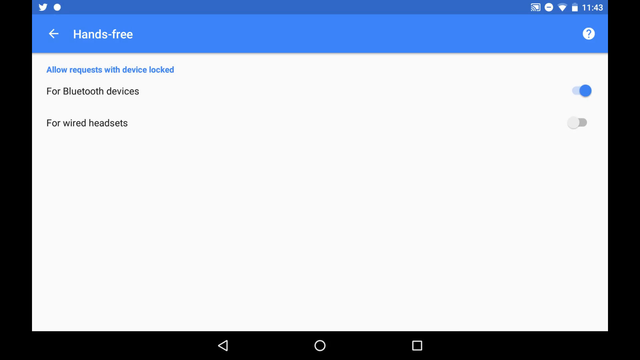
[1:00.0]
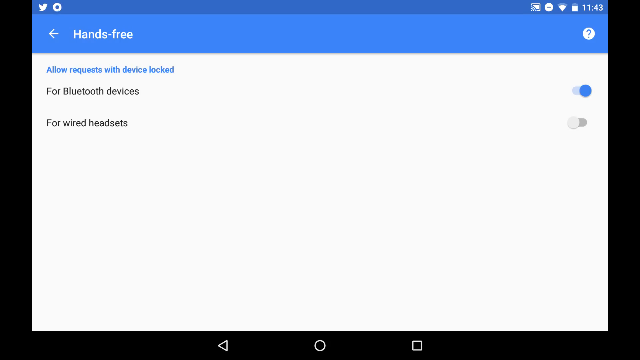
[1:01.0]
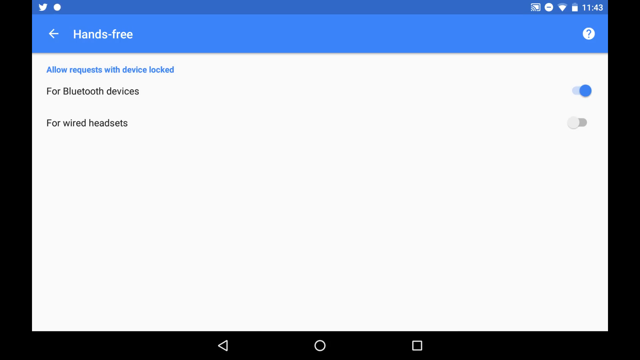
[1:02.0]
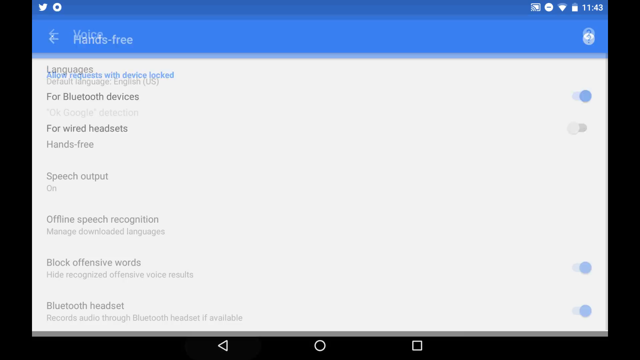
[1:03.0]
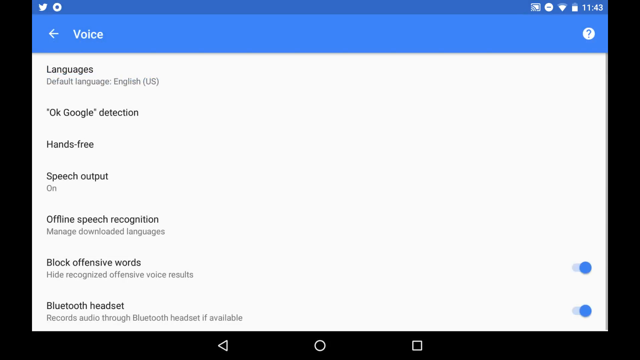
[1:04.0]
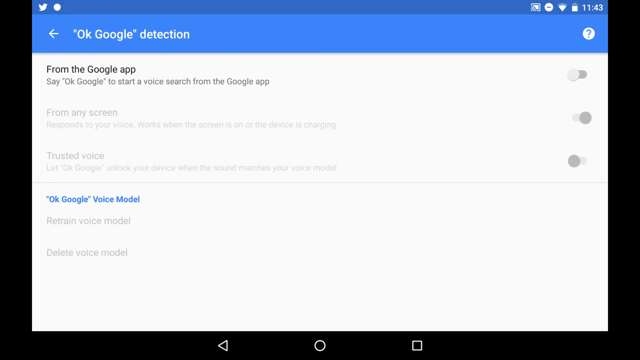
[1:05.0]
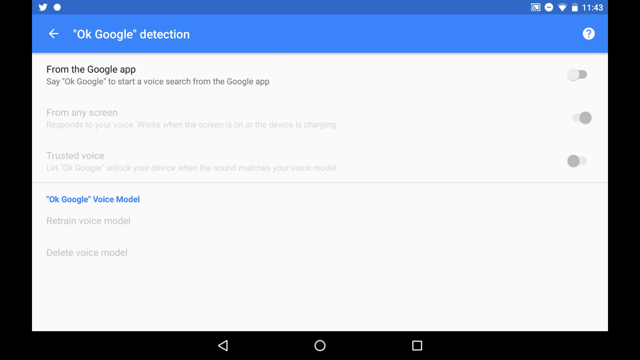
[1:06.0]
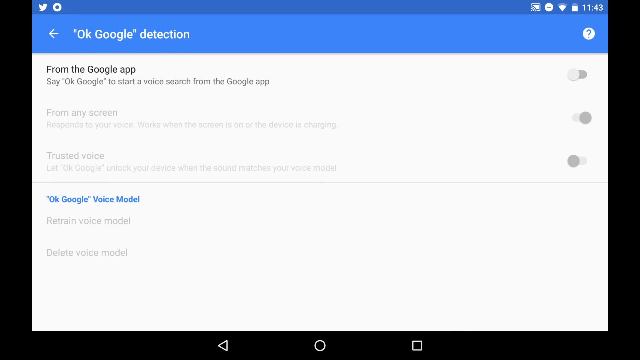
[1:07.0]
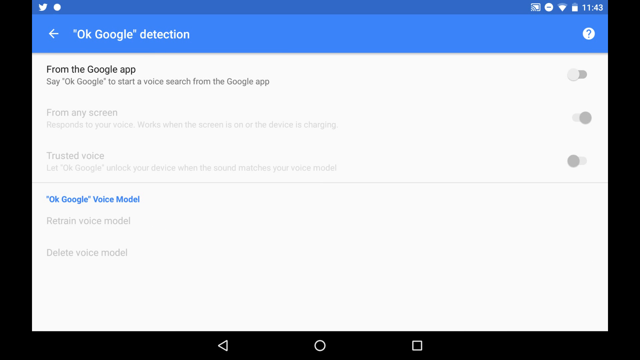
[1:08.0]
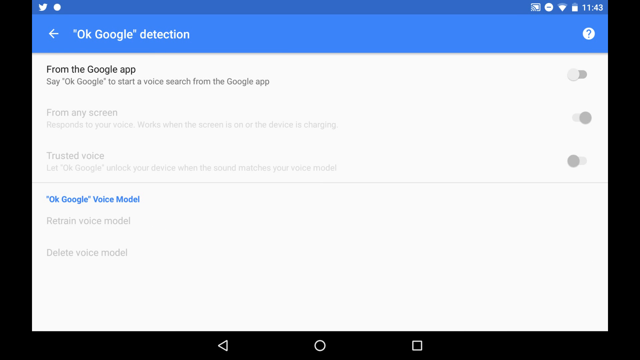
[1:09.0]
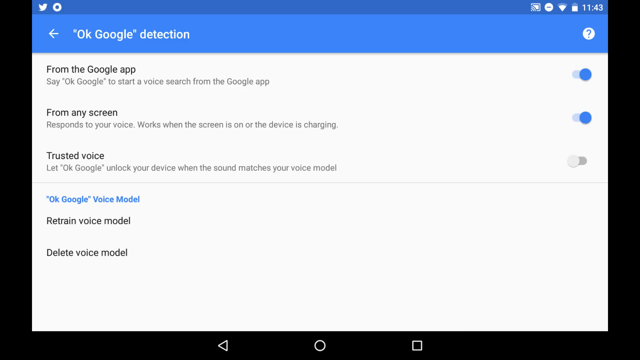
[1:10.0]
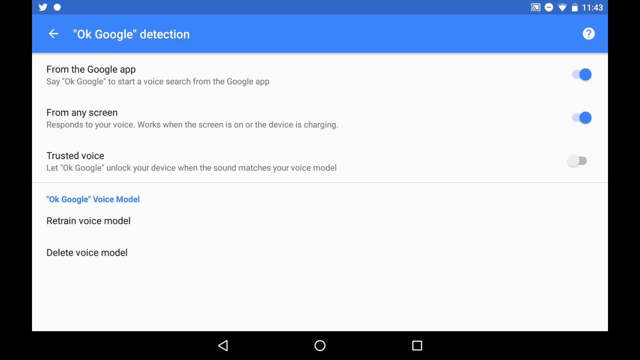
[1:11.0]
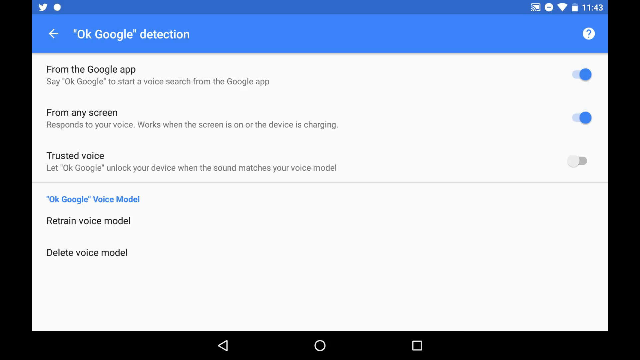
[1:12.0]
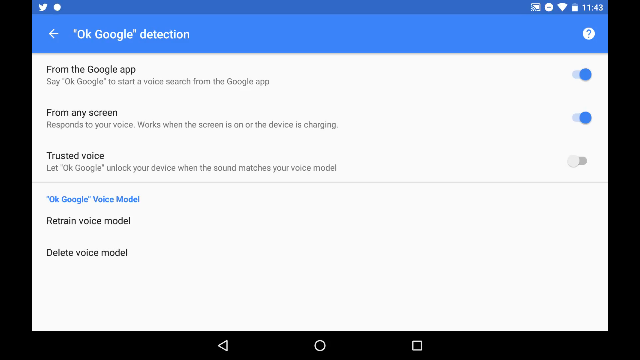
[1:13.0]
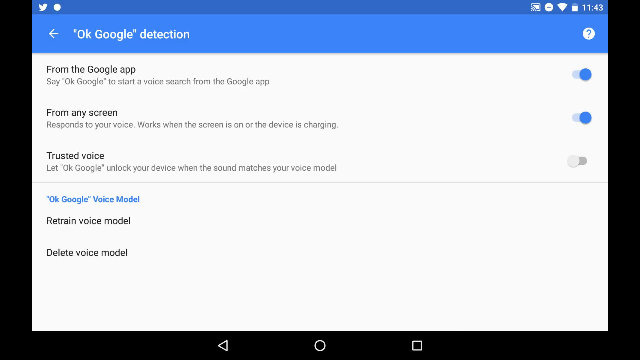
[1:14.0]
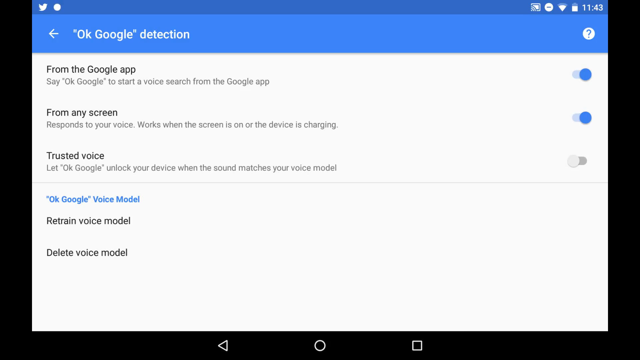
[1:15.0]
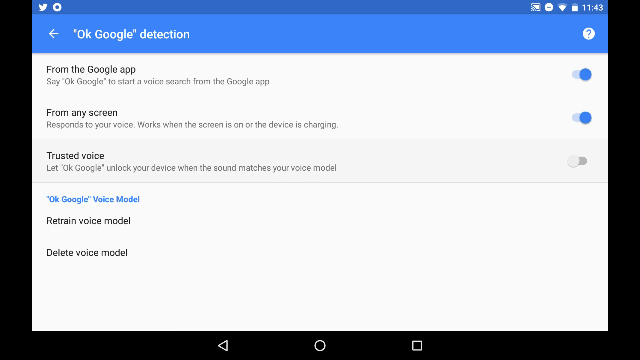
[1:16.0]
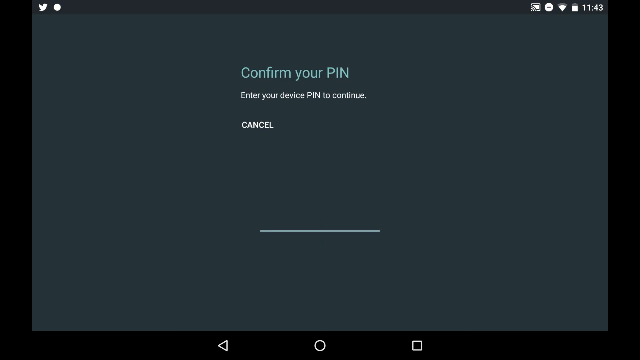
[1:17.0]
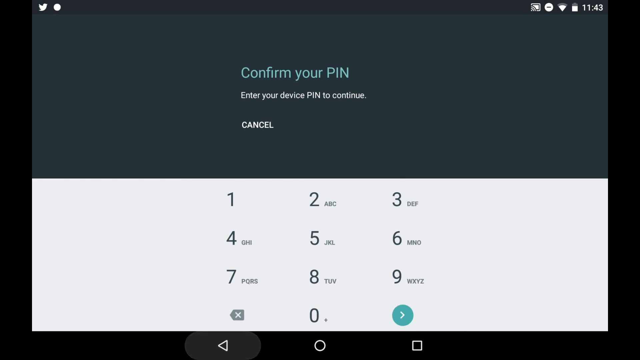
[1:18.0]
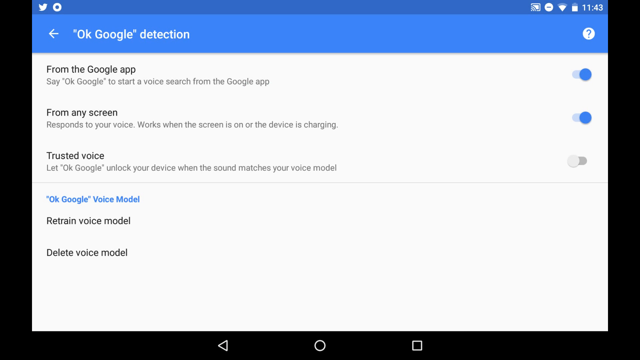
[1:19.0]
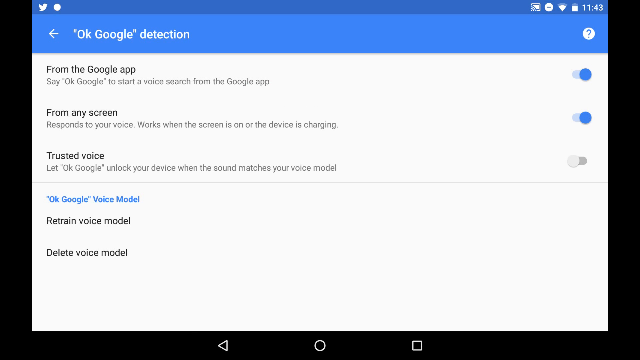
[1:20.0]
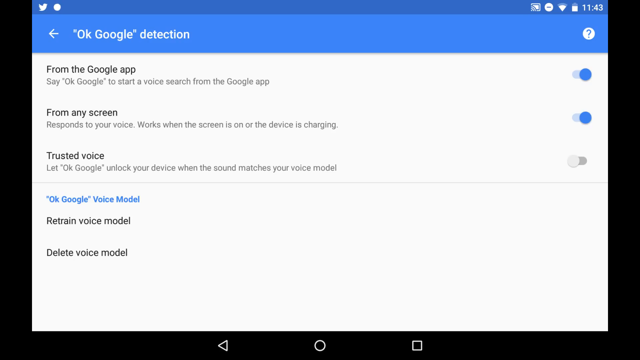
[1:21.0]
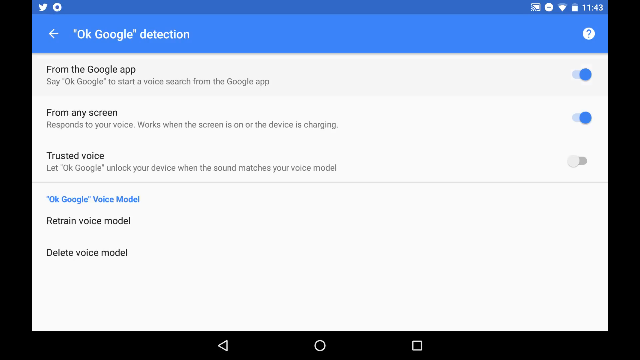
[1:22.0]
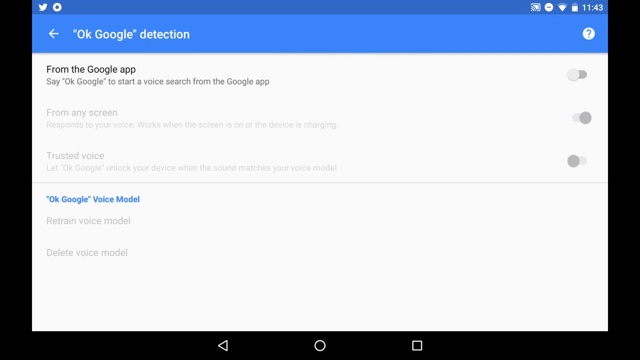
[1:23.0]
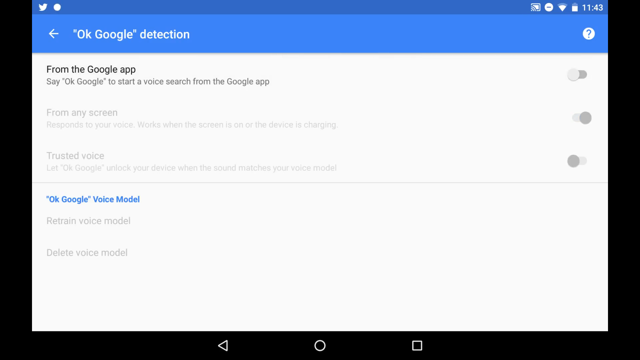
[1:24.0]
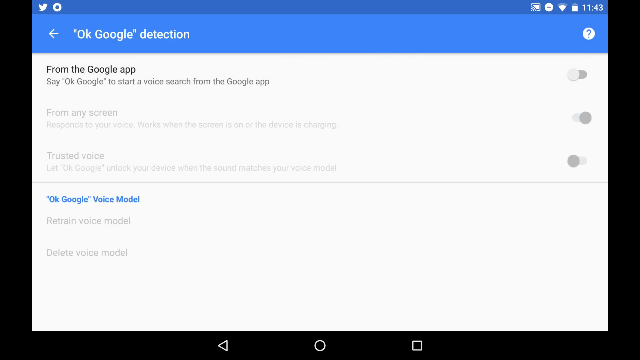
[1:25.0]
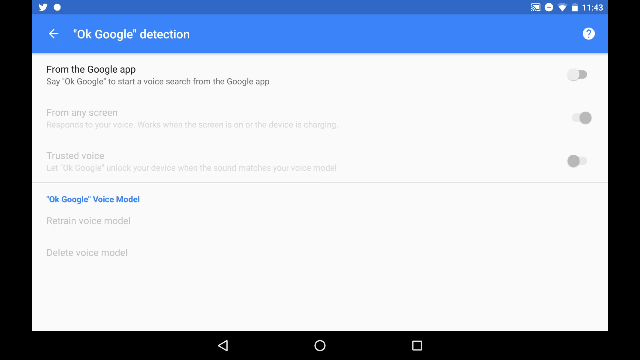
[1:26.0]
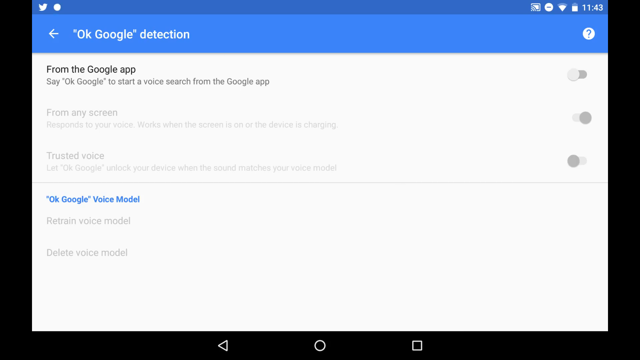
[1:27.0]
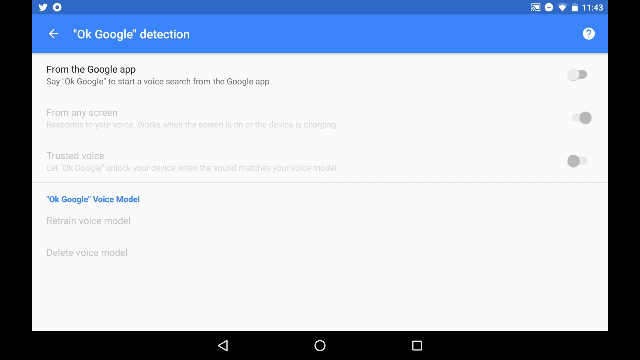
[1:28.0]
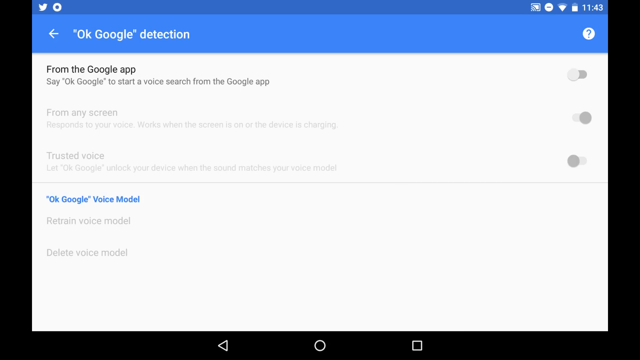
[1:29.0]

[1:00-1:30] A screen says "hands-free", with allow requests with device locked for Bluetooth devices on and for wired headsets disabled. A little circle in the top left corner opens and closes, with a Twitter logo next to it on the left side, while a battery, Wi-Fi, screencast icon, and the time 11:43 are at the top right. The user closes out and goes to the voice section, listing languages, default language English US, Okay Google detection, hands-free, speech output on, offline speech recognition, manage downloaded languages, block offensive words (hide recognized offensive voice results, on), and Bluetooth headset (records audio through Bluetooth headset if available, on). Another section, Okay Google detection, says "from the Google app, say okay Google to start a voice search from the Google app", and trusted voice is off, with text reading "Okay Google voice model", "retrain voice model" and "delete voice model". The screen is grayed out, then turns to a lighter color with "from the Google app" and "from any screen" enabled. The user then goes to a page that says "confirm your PIN" and "enter your device PIN to continue", with a cancel option, a box, and numbers to type in.